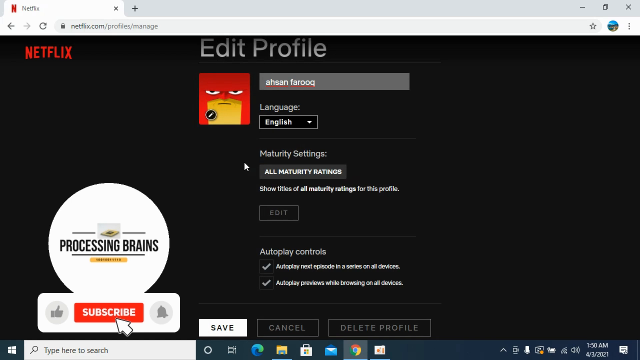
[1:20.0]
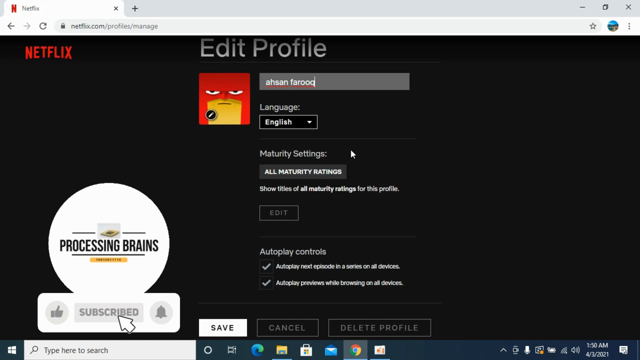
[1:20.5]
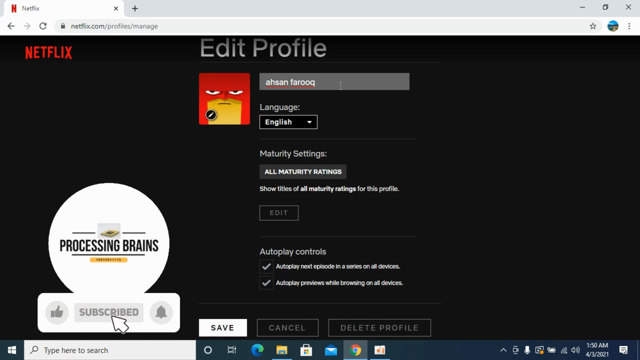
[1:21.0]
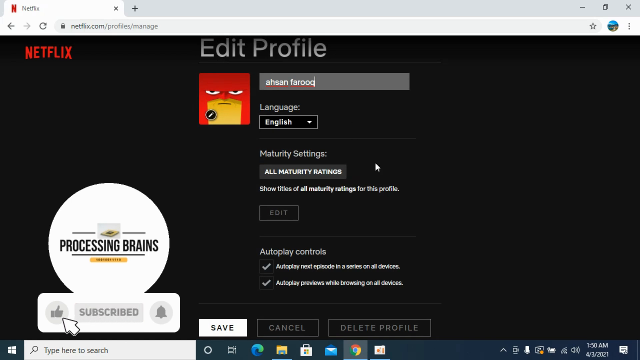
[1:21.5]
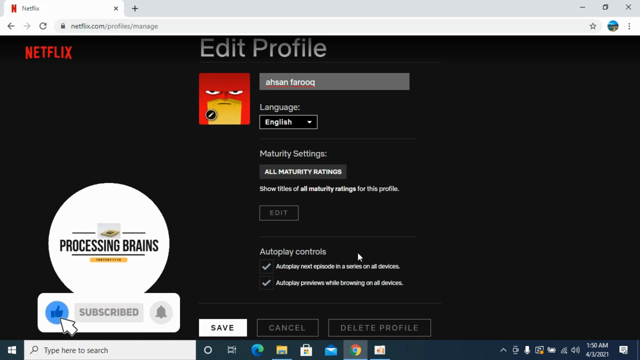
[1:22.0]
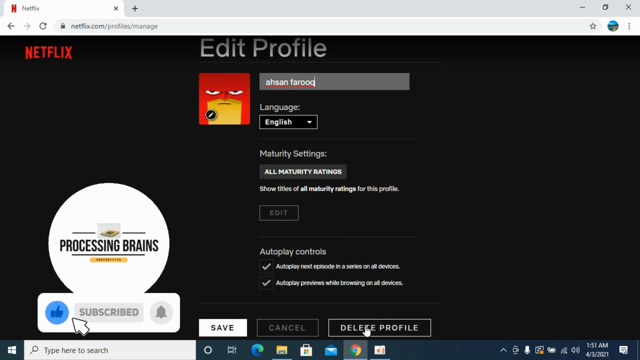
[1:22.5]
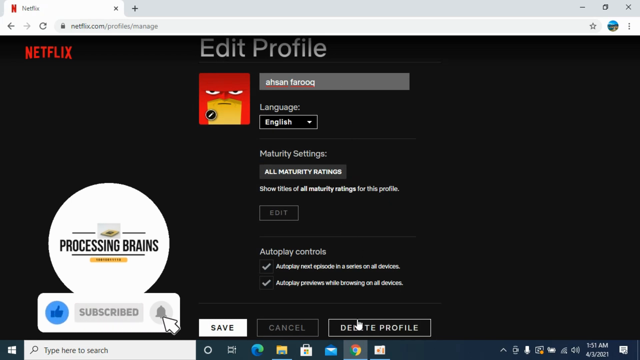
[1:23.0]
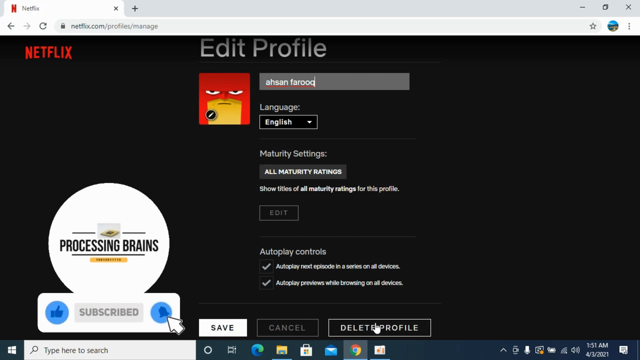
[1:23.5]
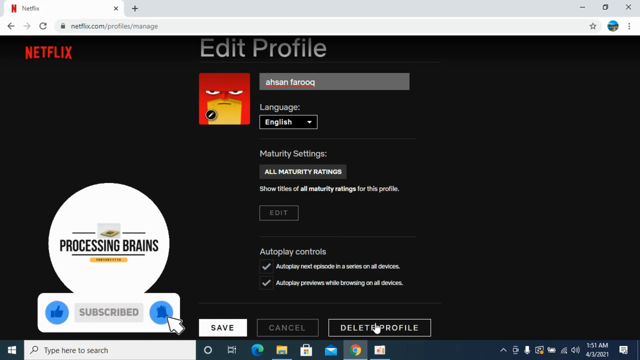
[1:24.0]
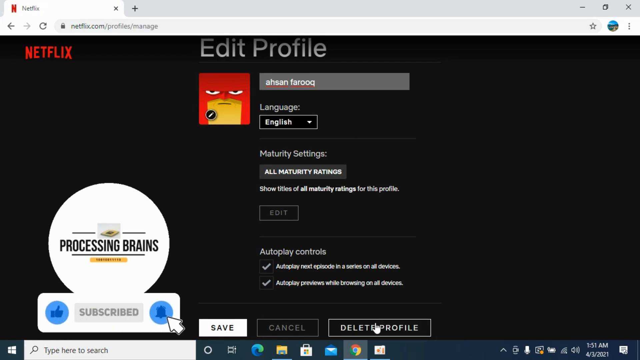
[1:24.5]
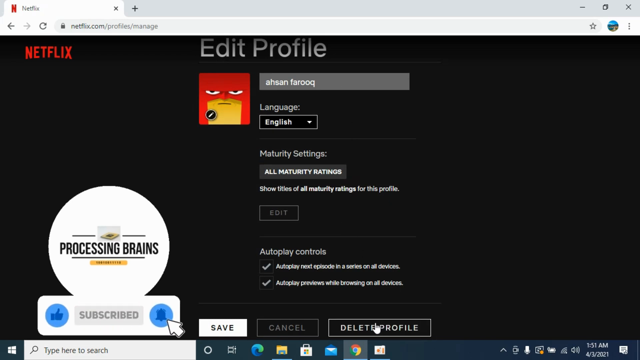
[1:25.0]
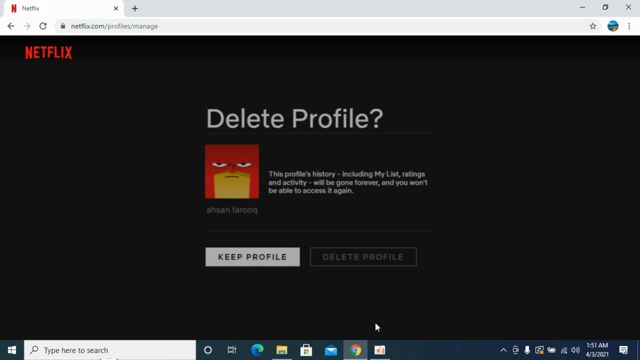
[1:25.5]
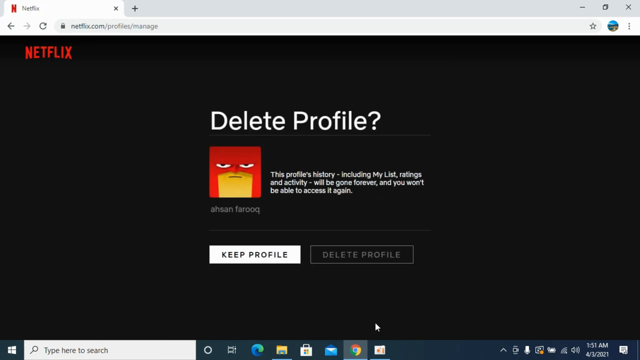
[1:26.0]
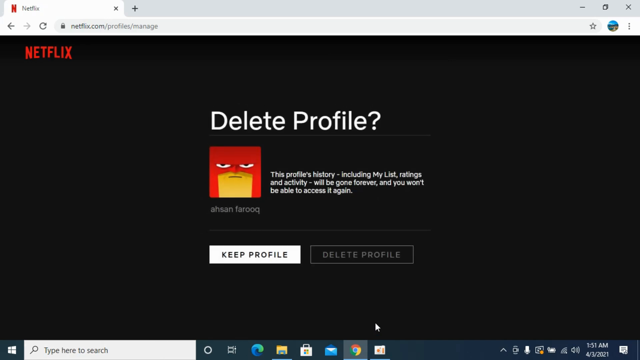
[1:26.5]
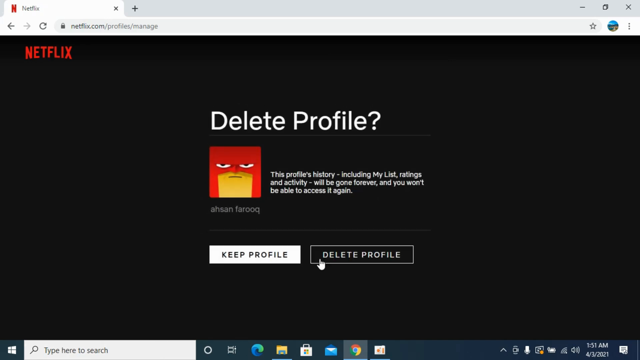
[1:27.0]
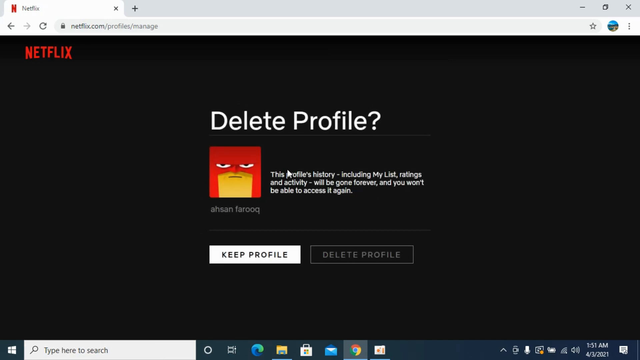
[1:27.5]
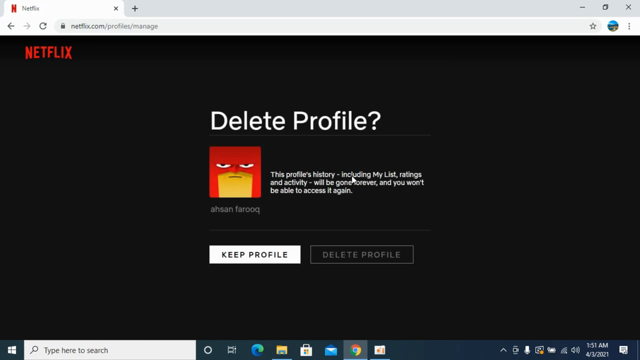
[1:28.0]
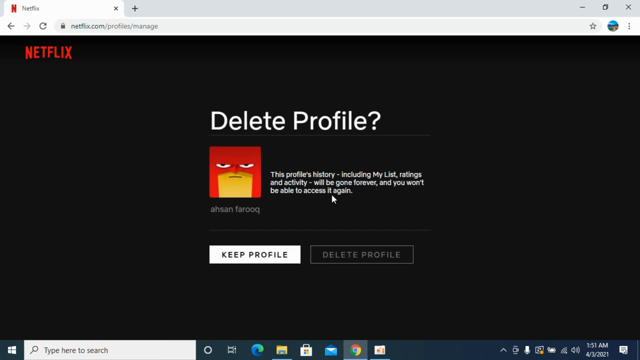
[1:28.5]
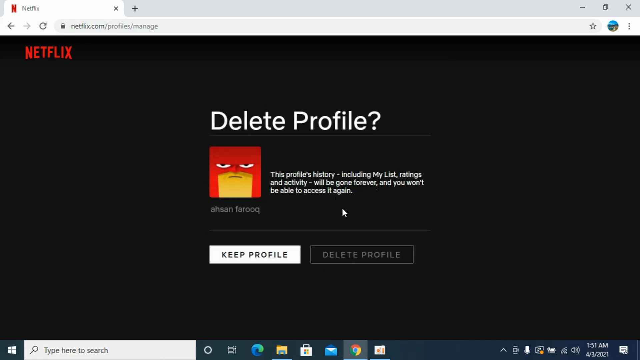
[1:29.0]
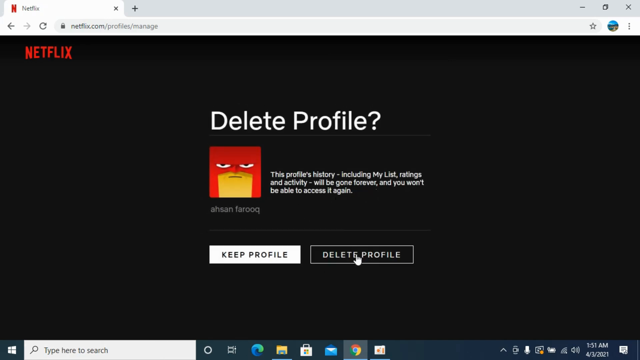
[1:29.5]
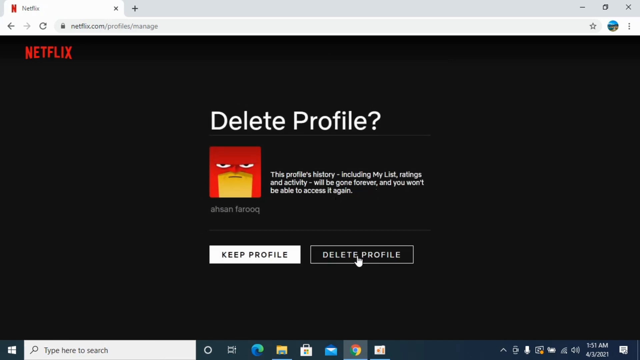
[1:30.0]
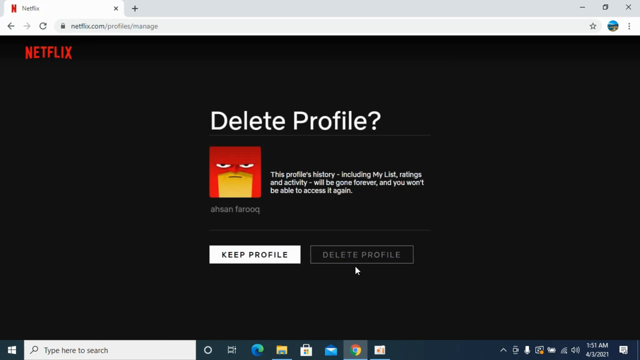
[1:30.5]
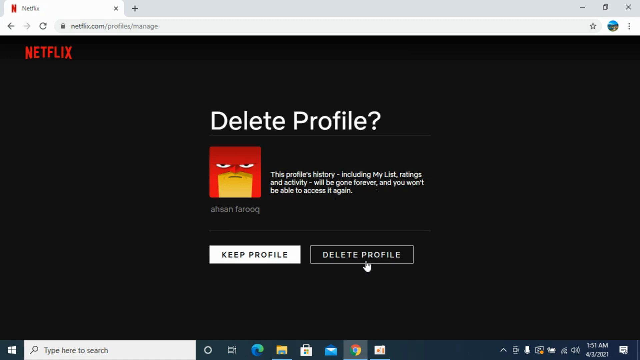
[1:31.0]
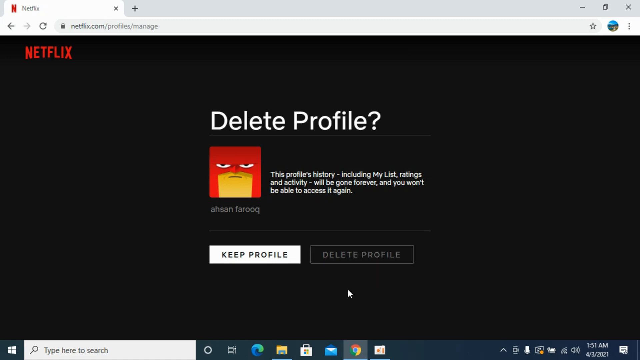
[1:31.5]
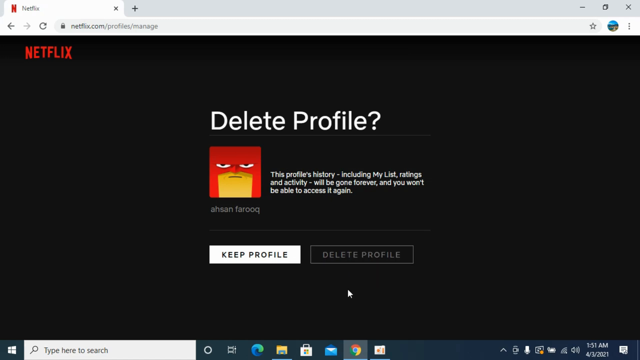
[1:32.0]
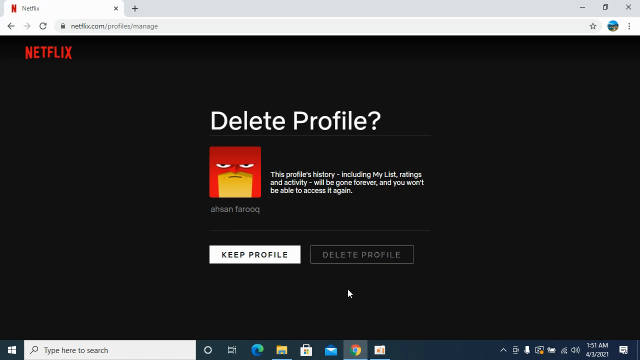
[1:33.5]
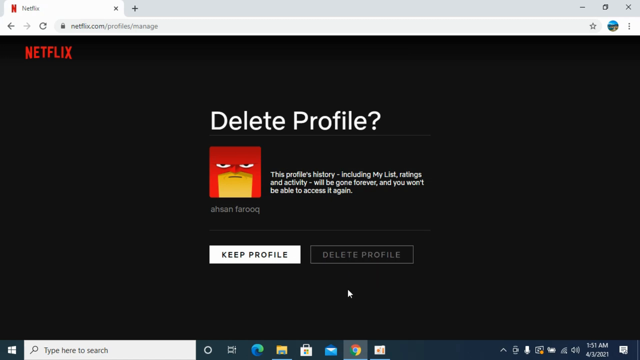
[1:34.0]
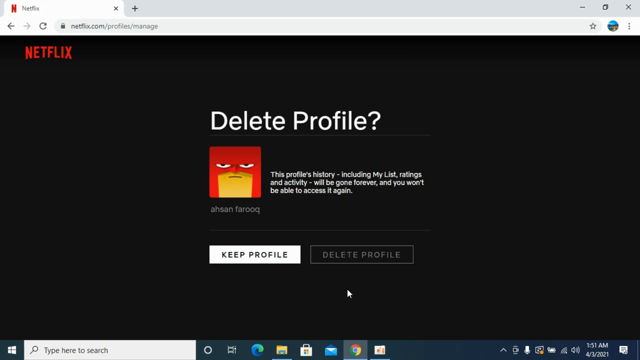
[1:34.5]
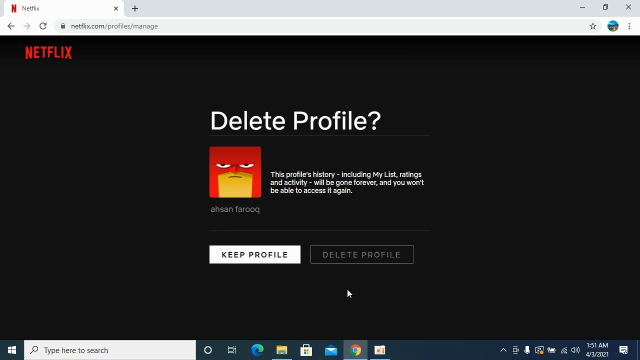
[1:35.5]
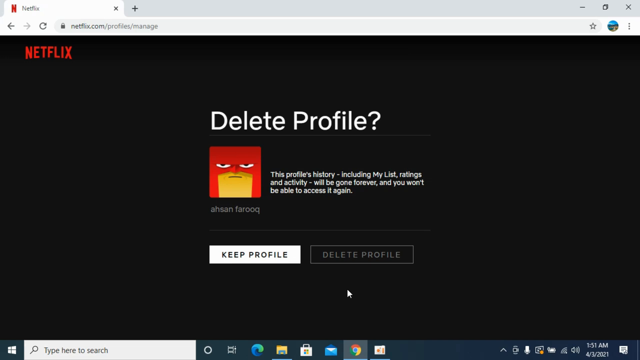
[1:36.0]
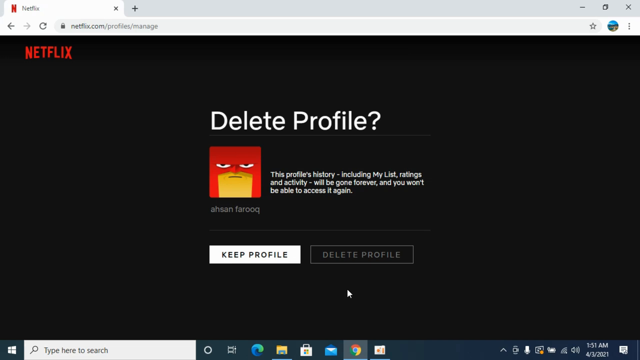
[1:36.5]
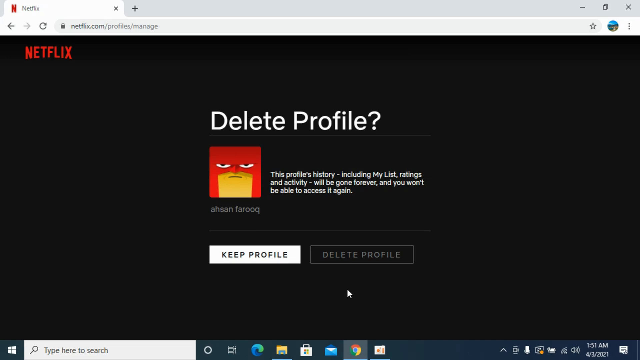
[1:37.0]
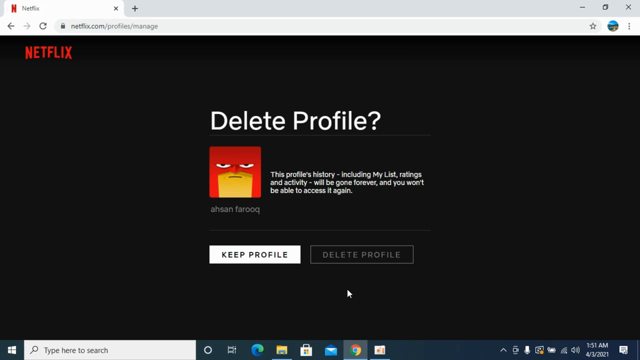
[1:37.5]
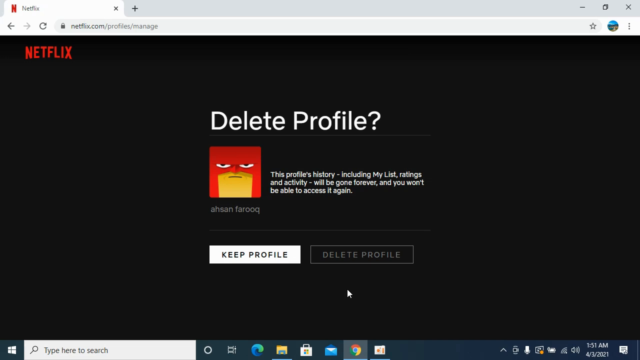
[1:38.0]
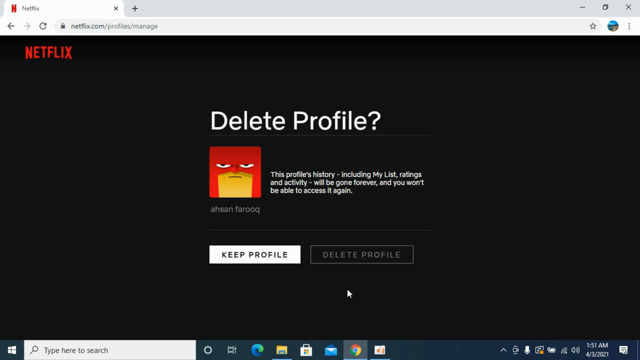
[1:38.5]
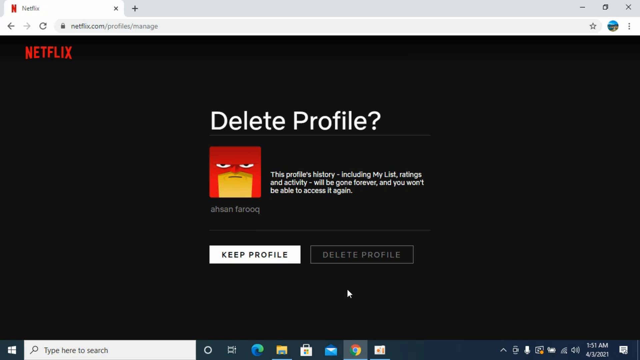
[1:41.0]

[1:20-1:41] A tab is open with "netflix.com/profile/manage" in the URL. The page has a solid black background with red writing that says "netflix" in the top left corner. In the center it says "edit profile", with a red cartoon character's icon and some text underlined in red. Below that it says "language english maturity settings all maturity settings", with a place to edit this. On the left there is a subscribe button whose arrow blinks up and down, changing from red to white. The user's cursor circles rapidly on the delete profile option at the bottom. A message on the screen says "this profile history including my list ratings activity will be gone forever and you won't be able to access it ever again." The cursor stays on it only for a second, making wide zigzag patterns, then moves back down to the delete profile button and makes a tight circle on it. He does not click delete profile; he just moves the mouse to the bottom.